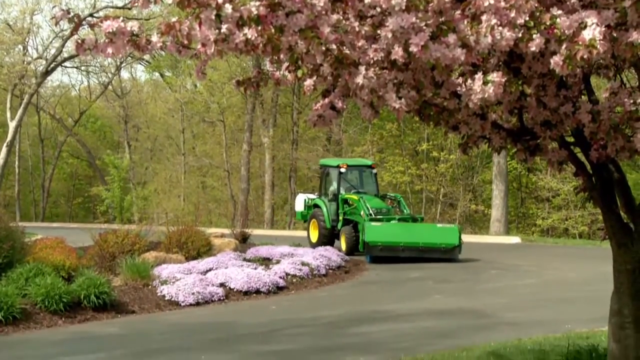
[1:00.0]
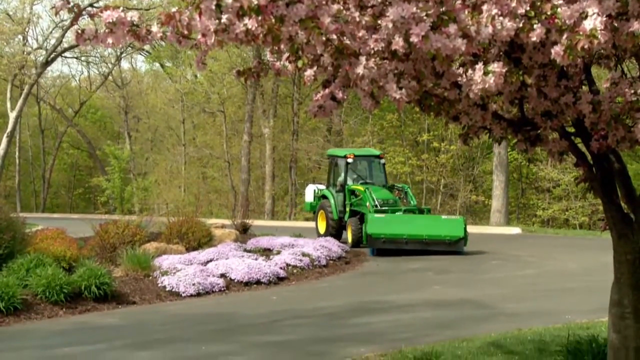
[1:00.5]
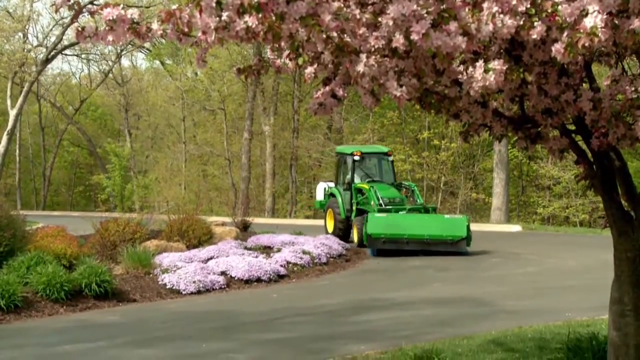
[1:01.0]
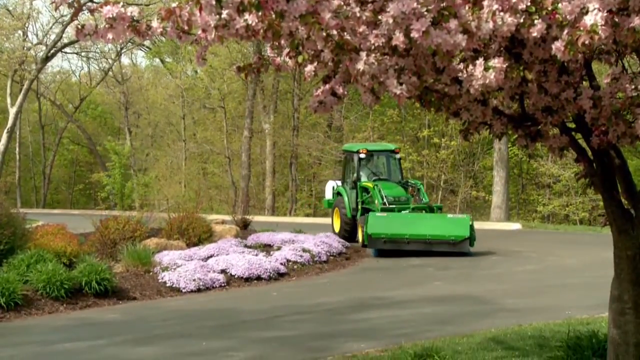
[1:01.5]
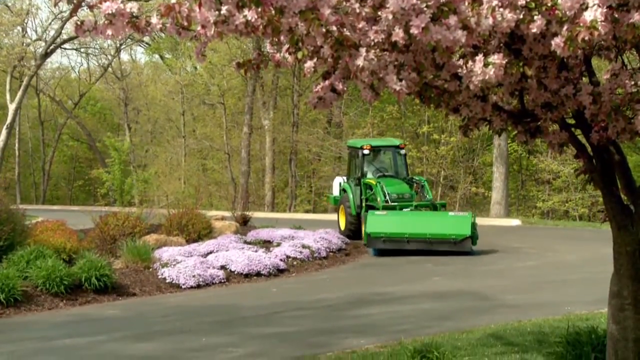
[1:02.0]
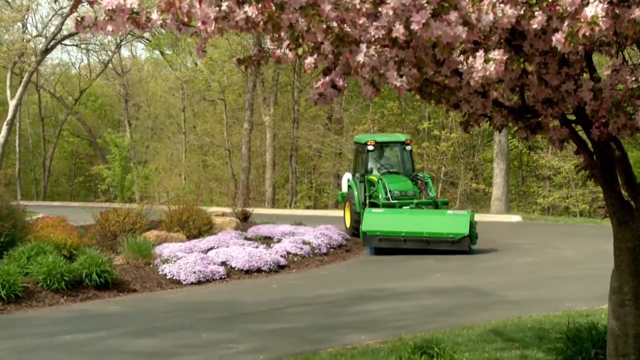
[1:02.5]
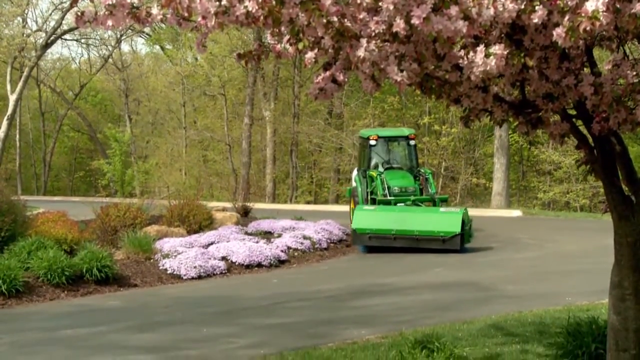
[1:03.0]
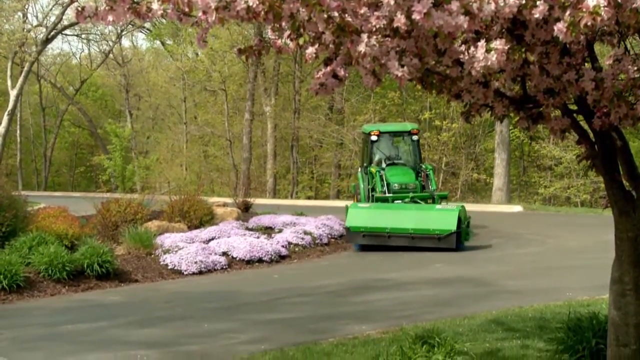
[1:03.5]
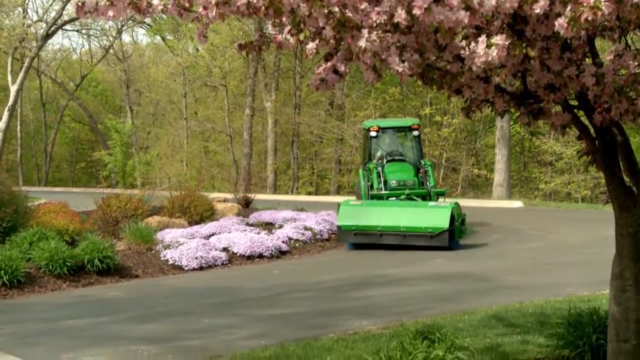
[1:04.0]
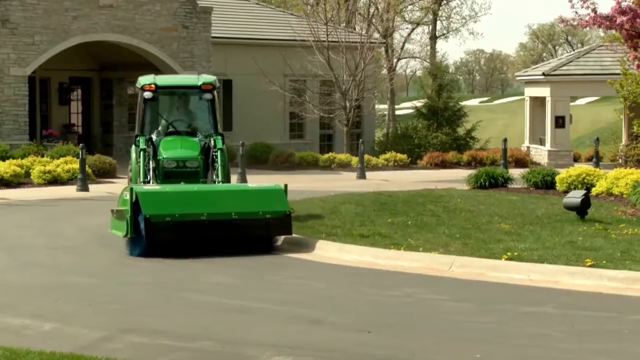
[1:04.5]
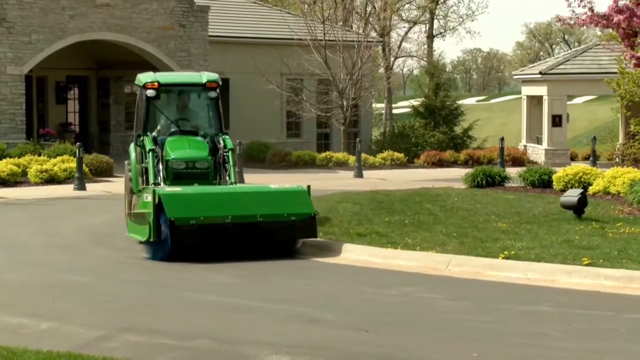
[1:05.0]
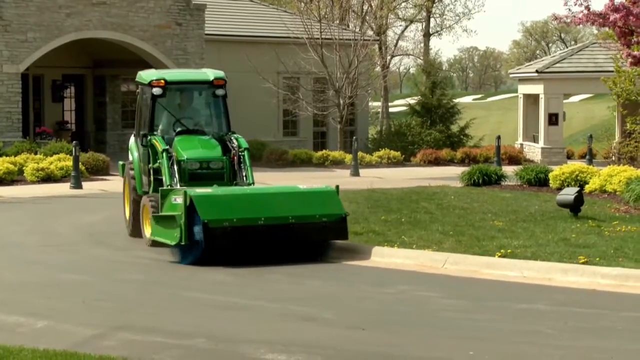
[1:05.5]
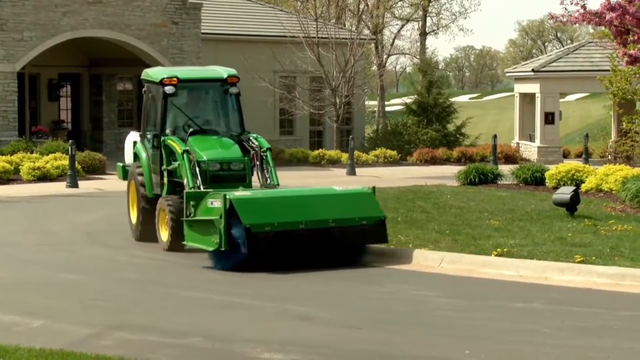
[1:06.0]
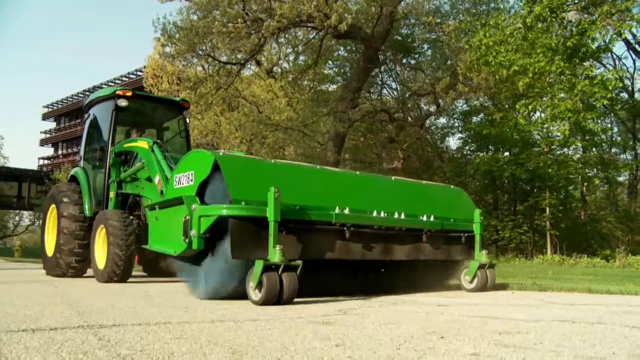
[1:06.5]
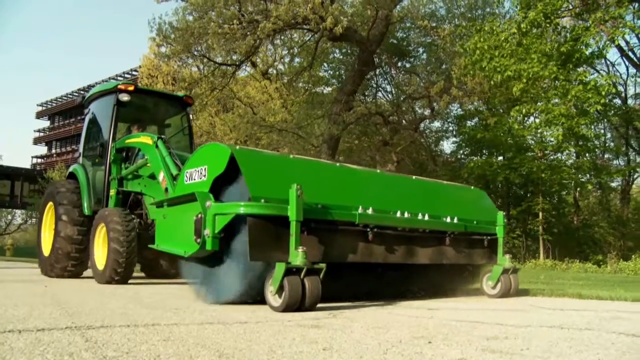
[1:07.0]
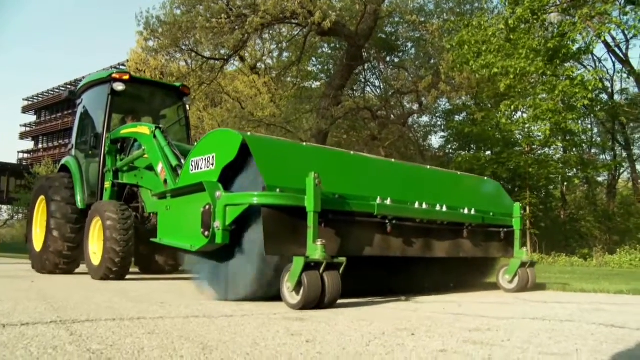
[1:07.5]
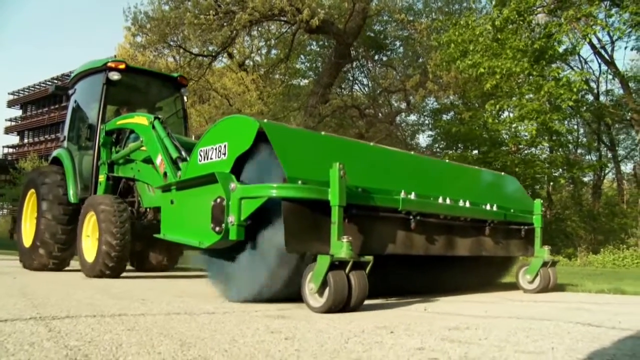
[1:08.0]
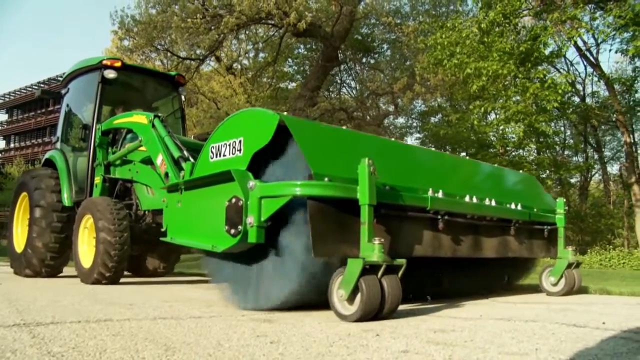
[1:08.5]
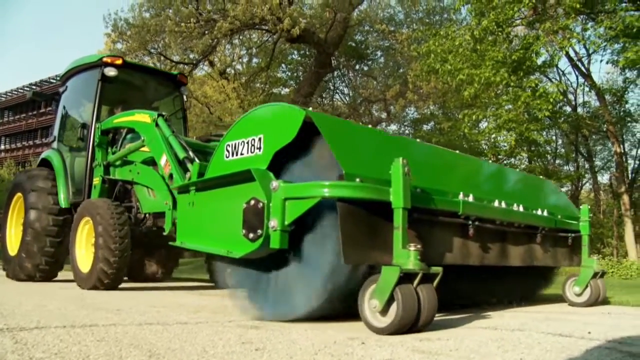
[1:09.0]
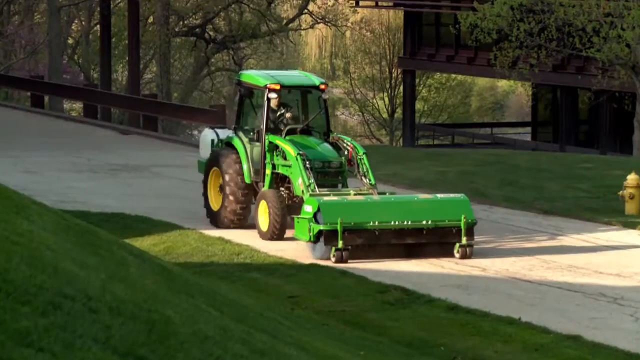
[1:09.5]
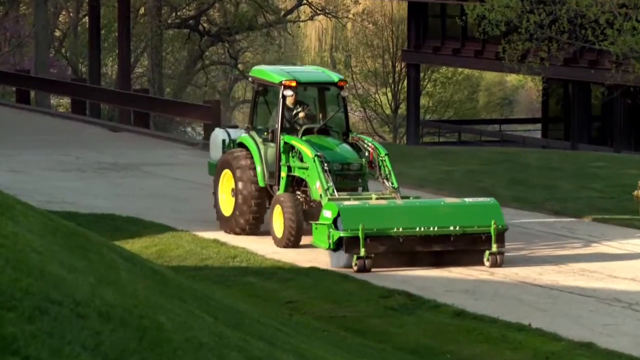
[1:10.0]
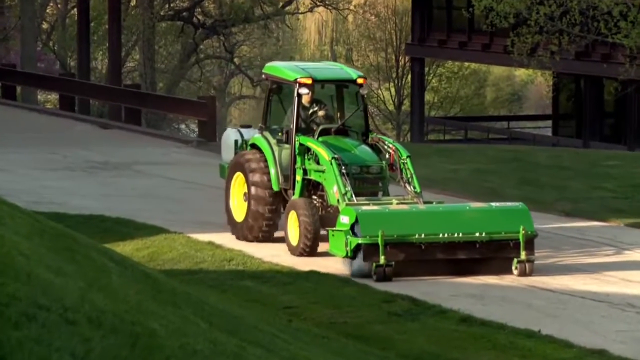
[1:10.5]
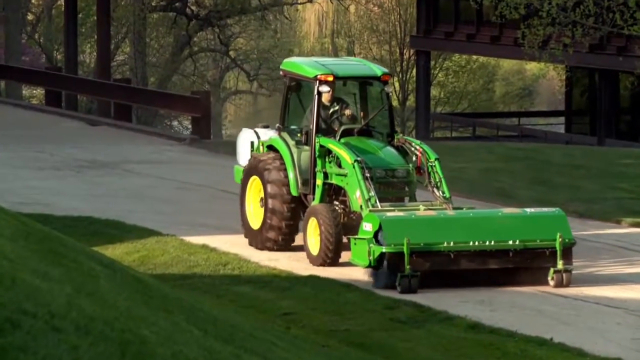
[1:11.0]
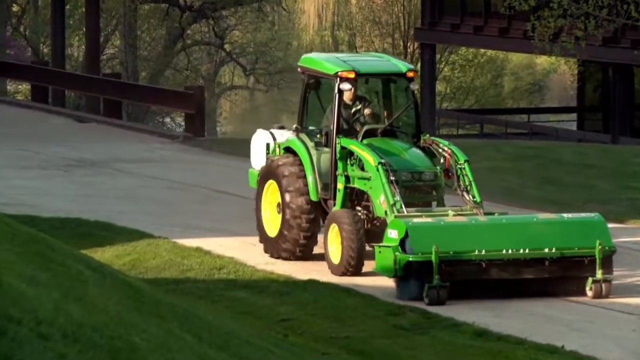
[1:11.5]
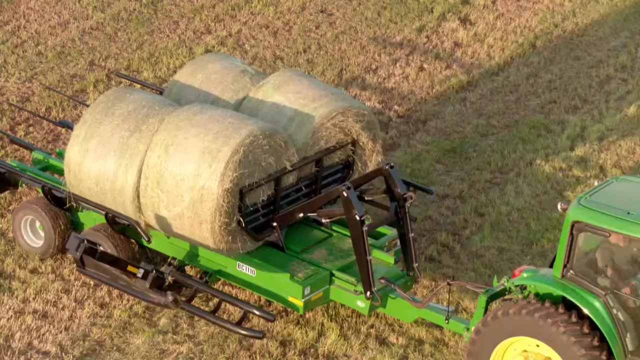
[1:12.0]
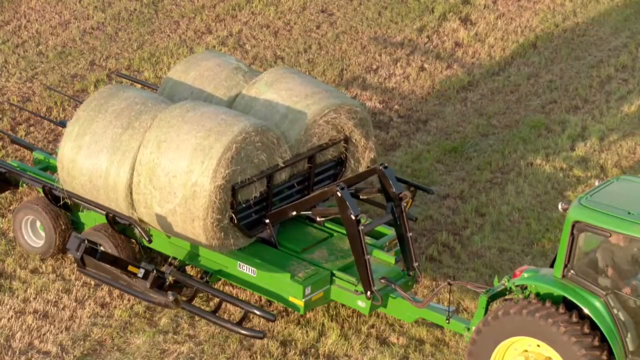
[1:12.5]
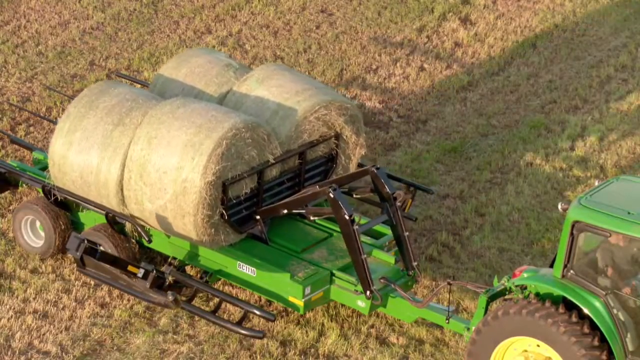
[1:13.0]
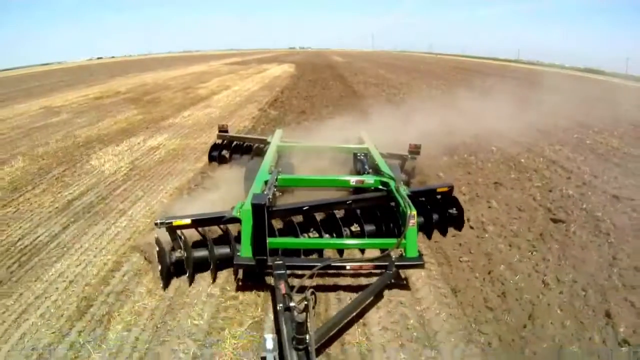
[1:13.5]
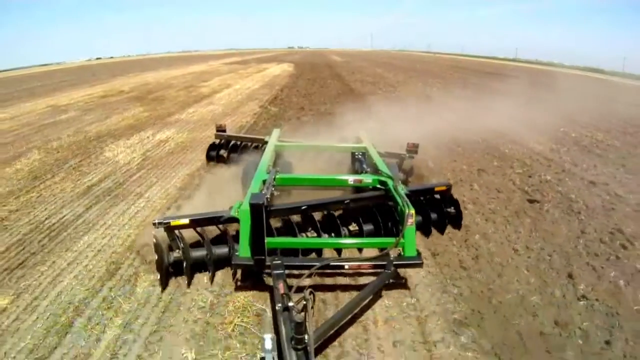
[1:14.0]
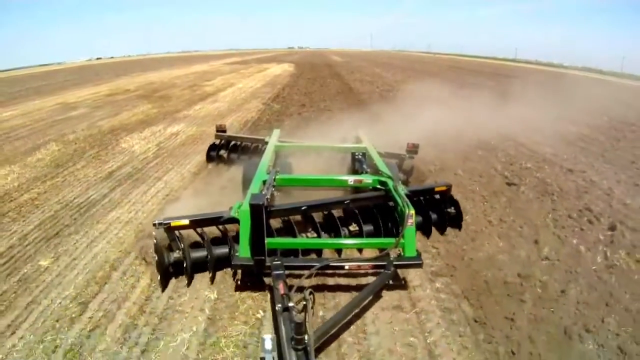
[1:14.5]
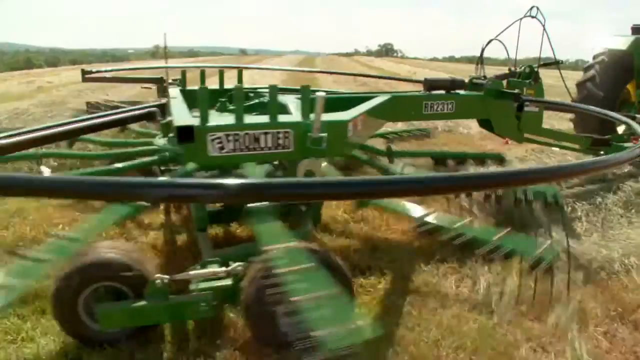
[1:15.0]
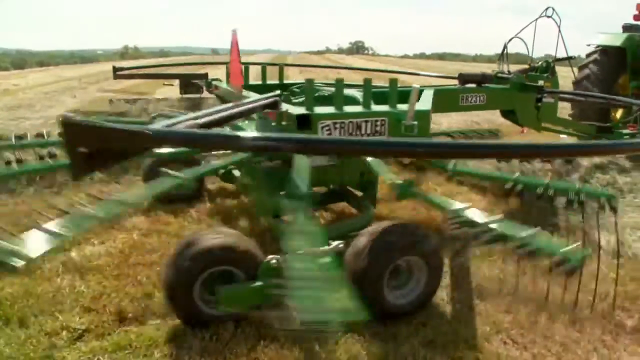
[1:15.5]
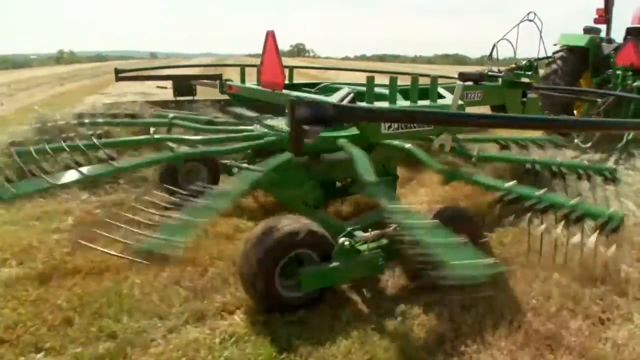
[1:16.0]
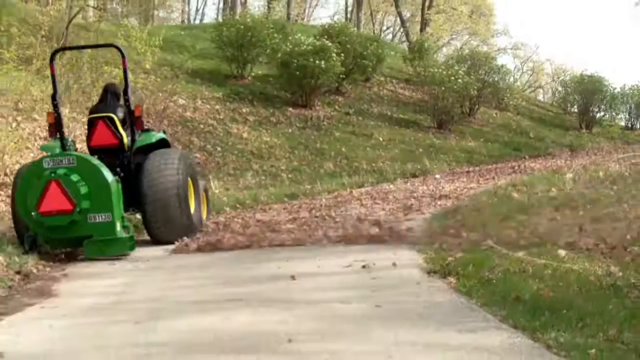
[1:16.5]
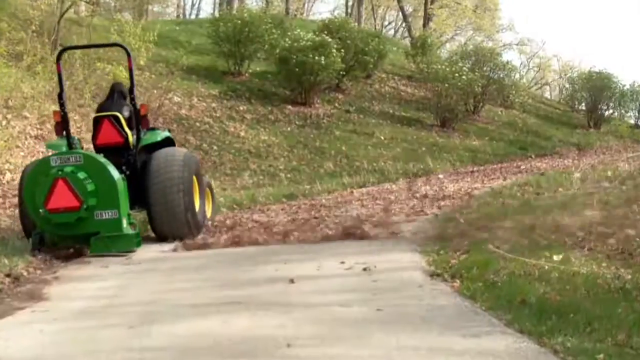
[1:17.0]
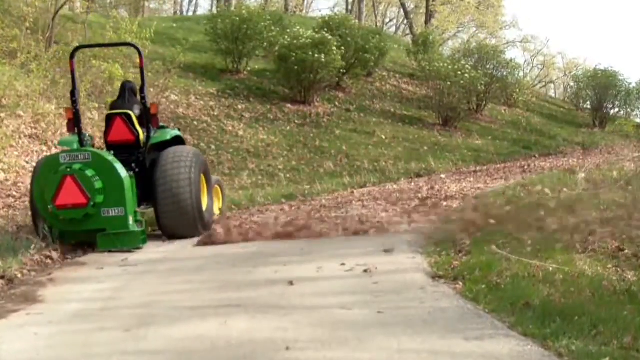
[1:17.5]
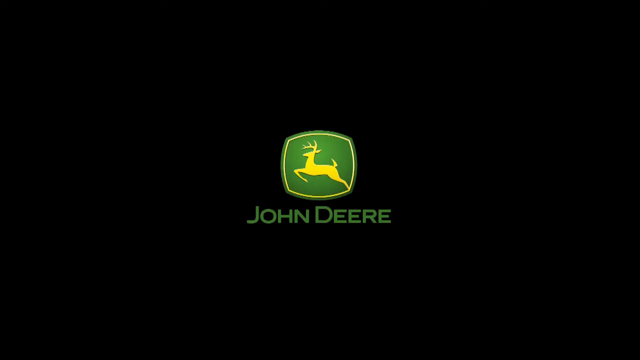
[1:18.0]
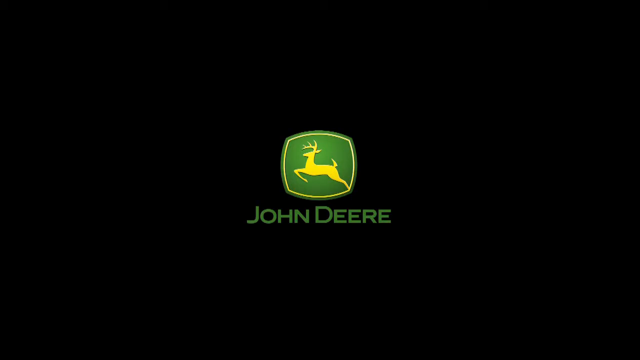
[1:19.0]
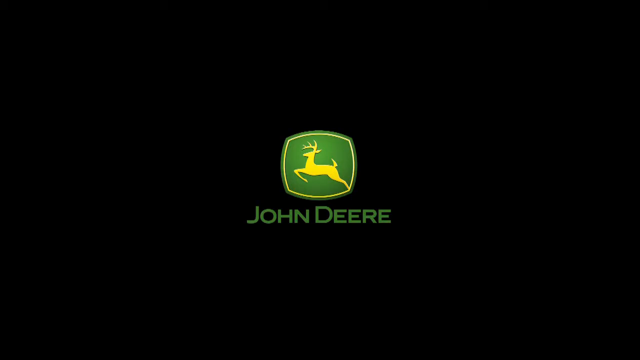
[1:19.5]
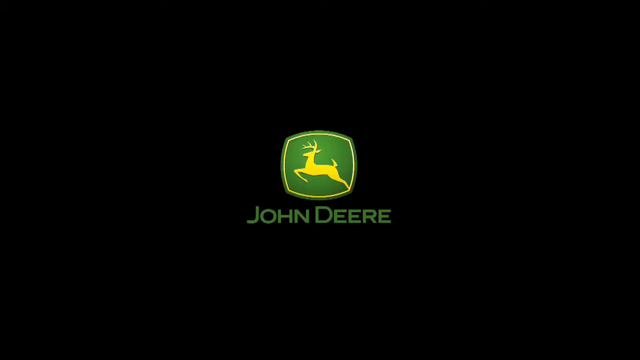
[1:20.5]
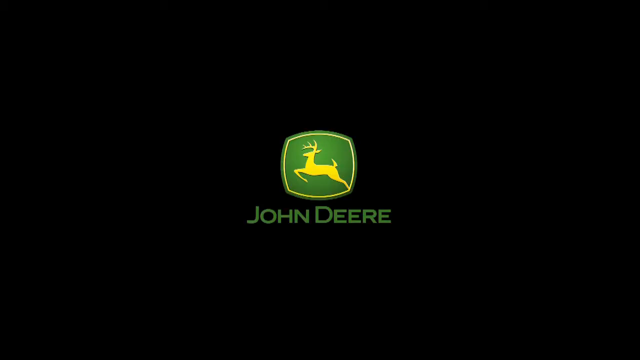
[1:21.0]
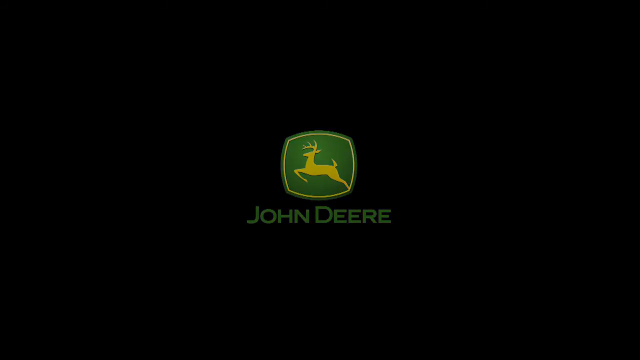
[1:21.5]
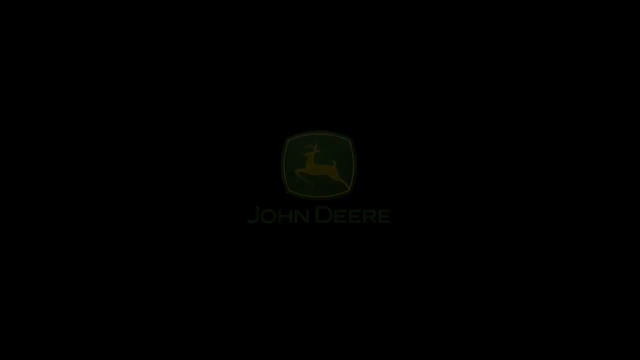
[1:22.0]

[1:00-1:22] The green tractor with the device attached to the front passes along cemented roads, with the pink plants by its side and the pink tree in the front. A close-up shows the machine attached to the front of the tractor, which seems to be cleaning the streets; in the background there is a big white house with an entry made of gray stones. Then come more quick cuts of footage of machines that can be attached to these tractors, all green, working in fields or farms, such as preparing them for the harvest or loading some charges. The video finishes with a black screen on which a green logo appears, with a small yellow line and a yellow deer inside it, and the brand name written in green letters: "John Deere".